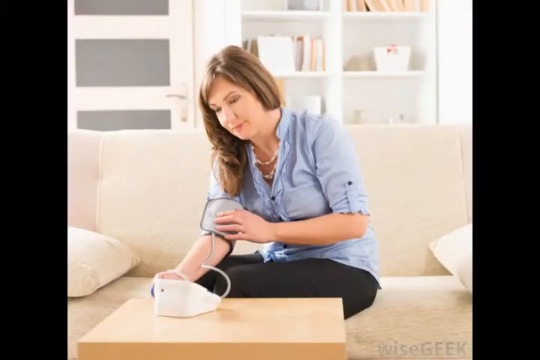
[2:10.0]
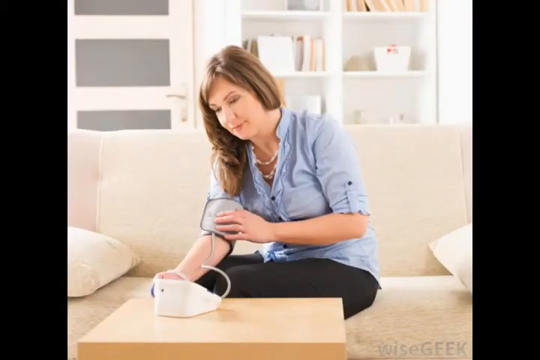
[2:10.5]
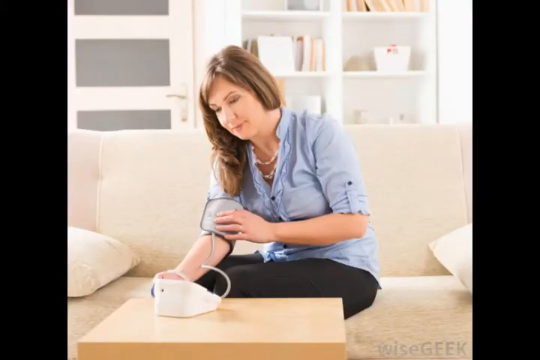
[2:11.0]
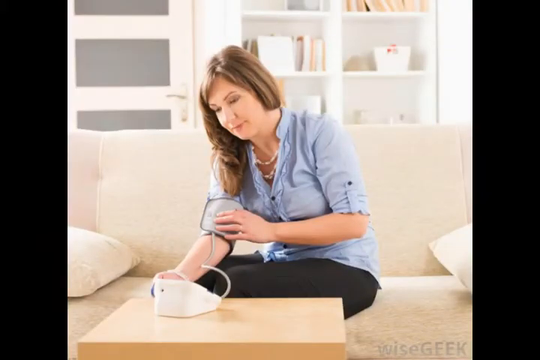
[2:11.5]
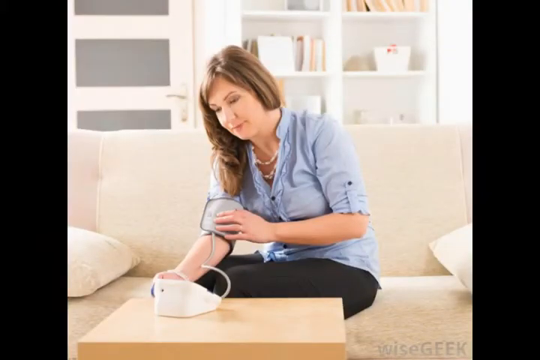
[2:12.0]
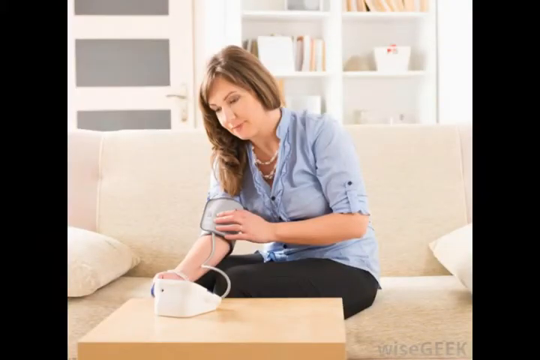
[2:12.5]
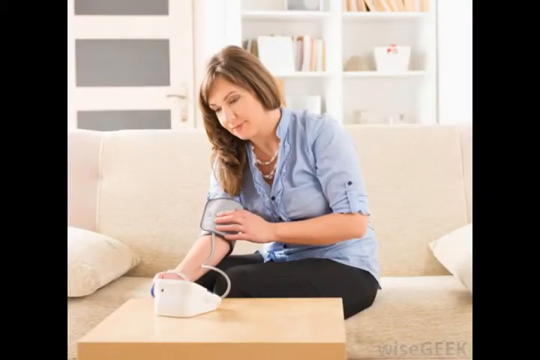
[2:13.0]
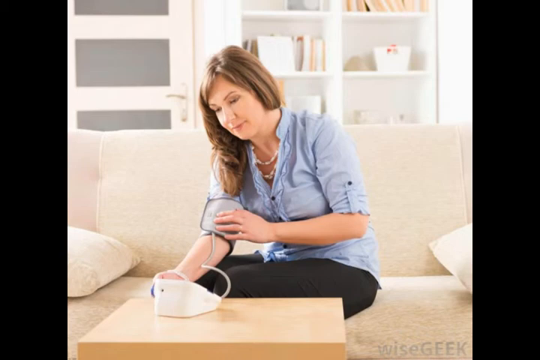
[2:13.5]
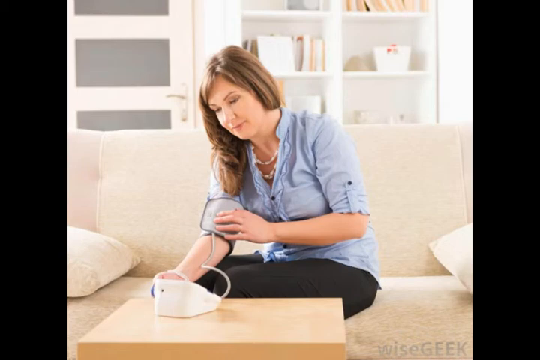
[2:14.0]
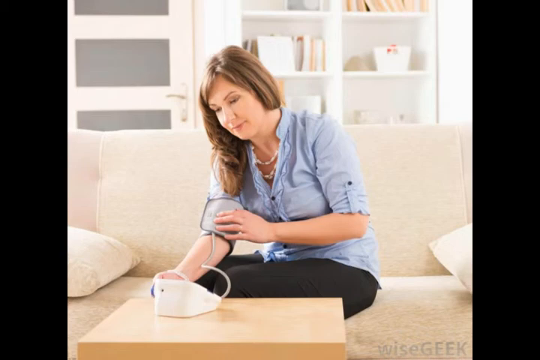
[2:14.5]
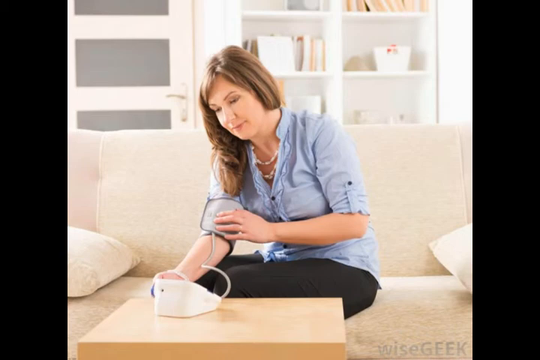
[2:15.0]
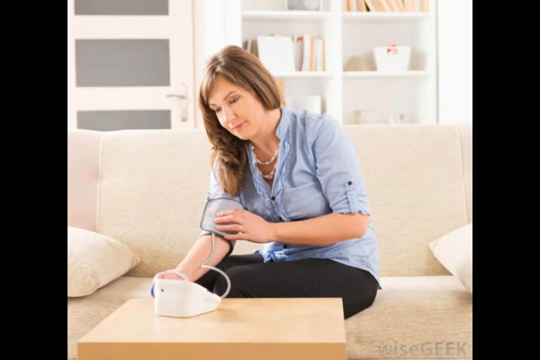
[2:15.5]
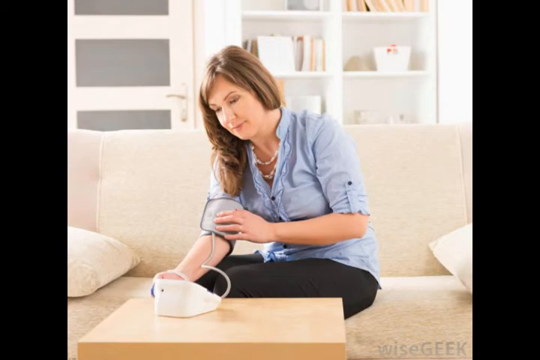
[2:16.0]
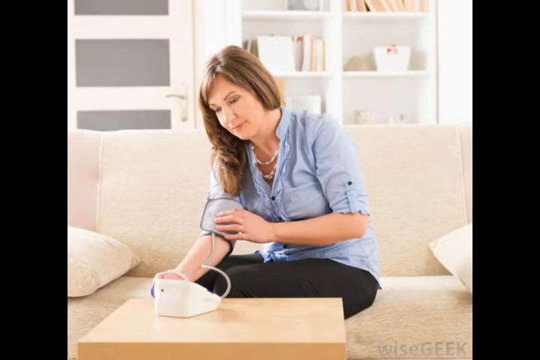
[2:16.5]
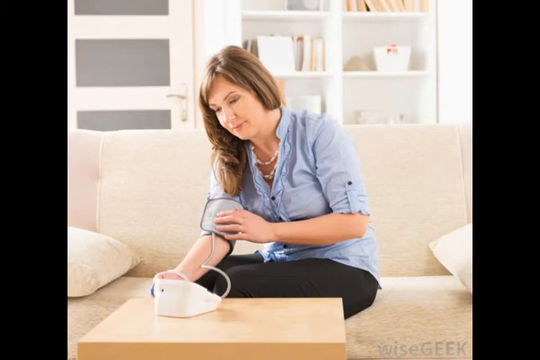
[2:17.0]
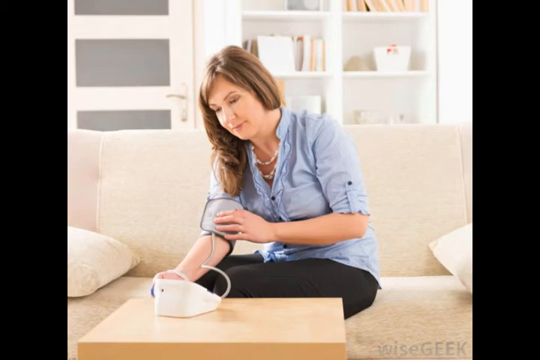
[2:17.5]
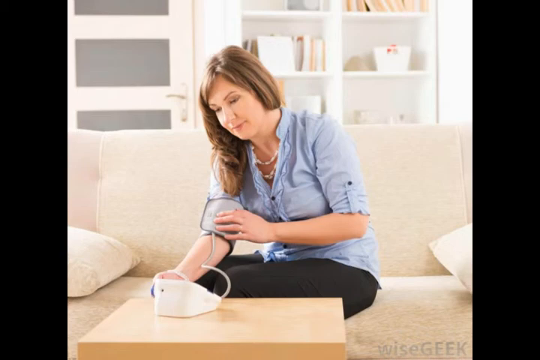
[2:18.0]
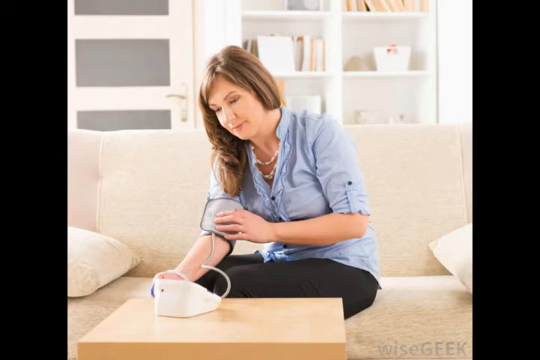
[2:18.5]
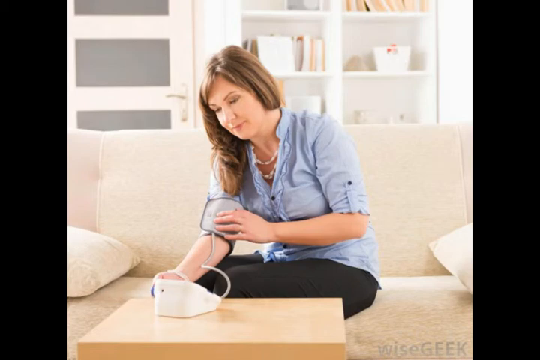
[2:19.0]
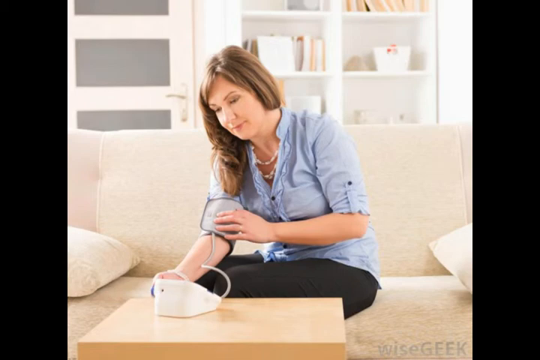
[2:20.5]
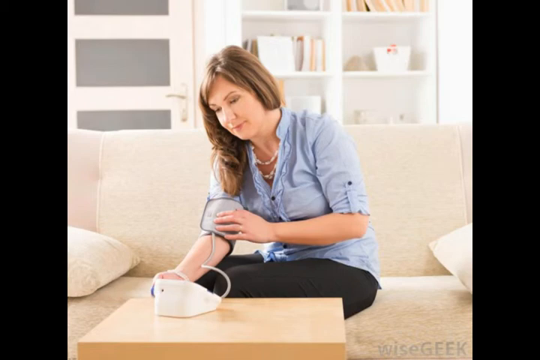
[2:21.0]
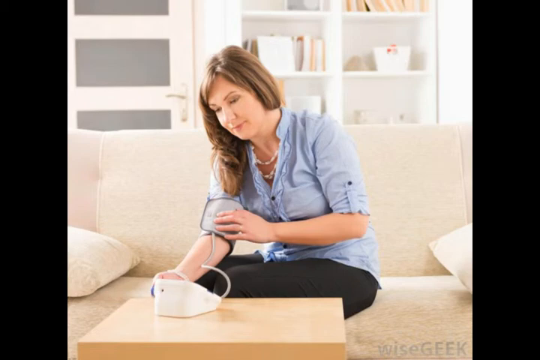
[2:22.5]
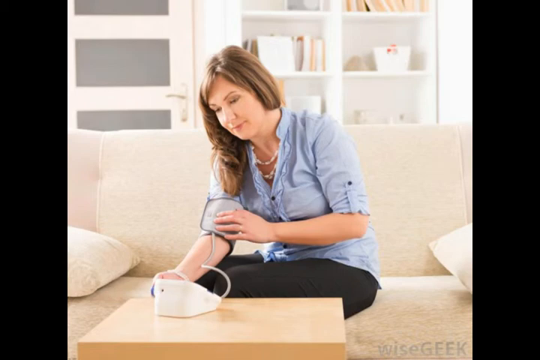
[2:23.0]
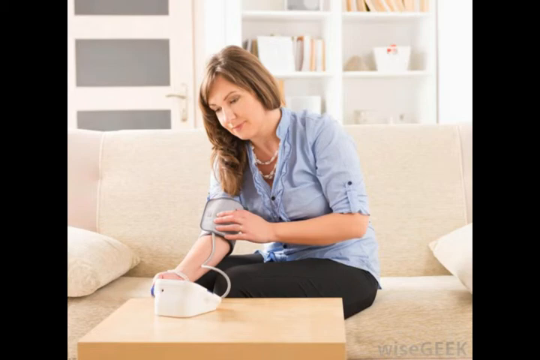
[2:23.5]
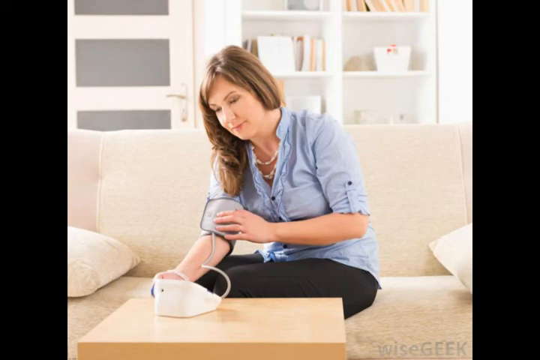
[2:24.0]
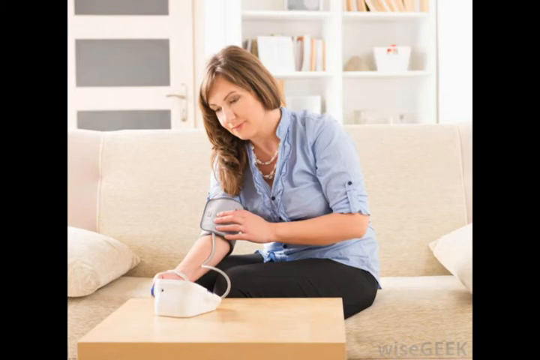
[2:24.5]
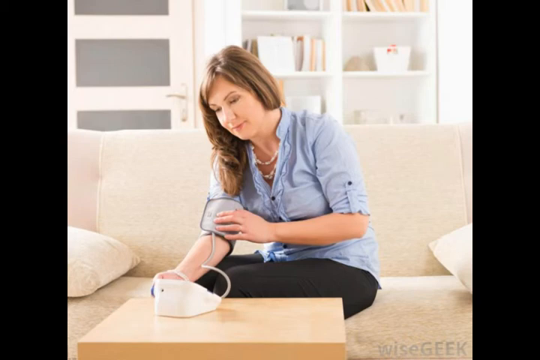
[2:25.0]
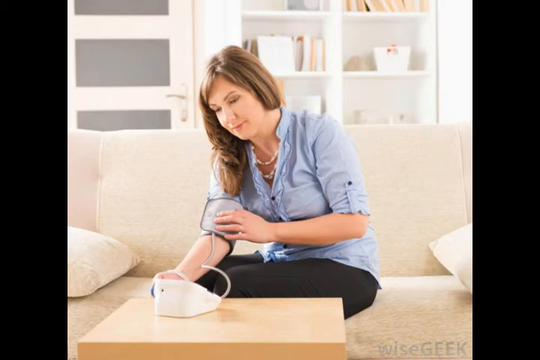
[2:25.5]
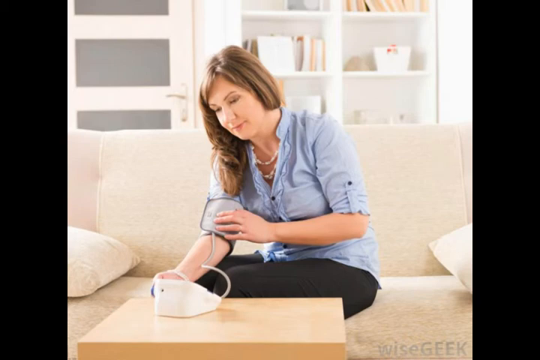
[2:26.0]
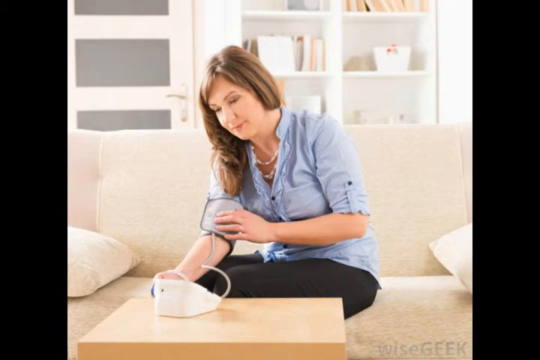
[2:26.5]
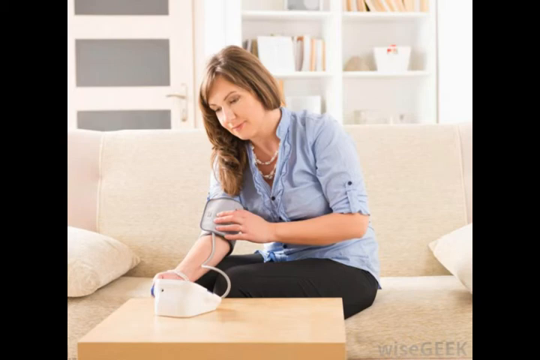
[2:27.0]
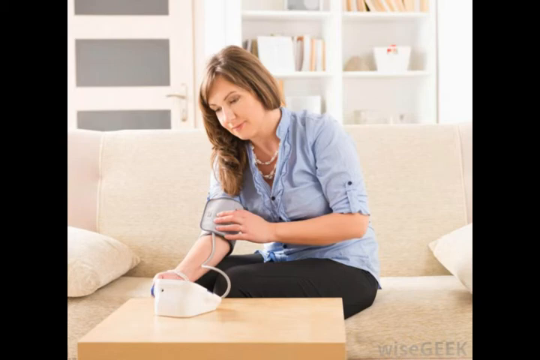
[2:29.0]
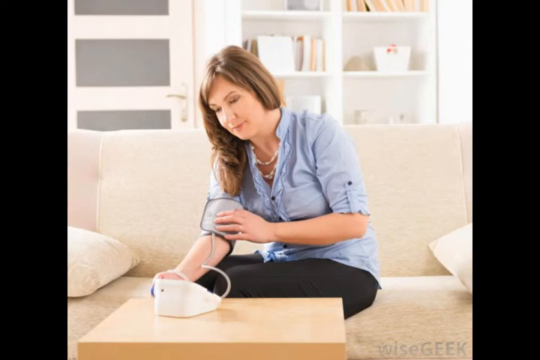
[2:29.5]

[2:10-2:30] A still shows a woman taking her own blood pressure using a machine. She has brown hair and wears a blue shirt and black trousers. She sits on a white sofa with two cushions visible. A table in front of her appears to be light colored wood. The white machine, apparently a blood pressure machine, sits on the table and has tubes going into a cuff around her arm above the elbow; she appears to be pressing buttons on it. Behind the woman, who is in her early 40s, is a bookshelf of some sort holding some books and little items. The background is very white, with a white door, white shelf and white sofa, giving a very clinical look.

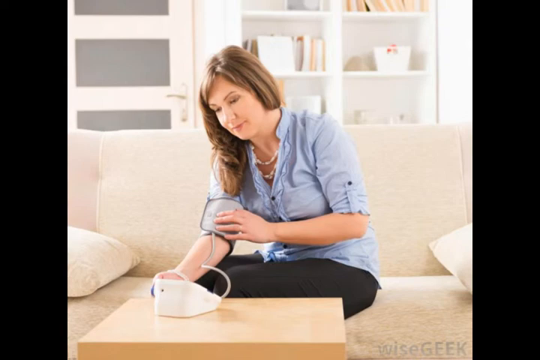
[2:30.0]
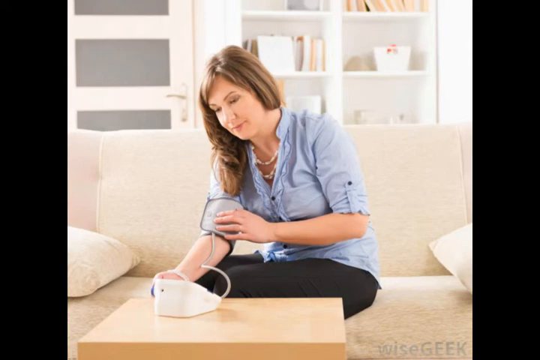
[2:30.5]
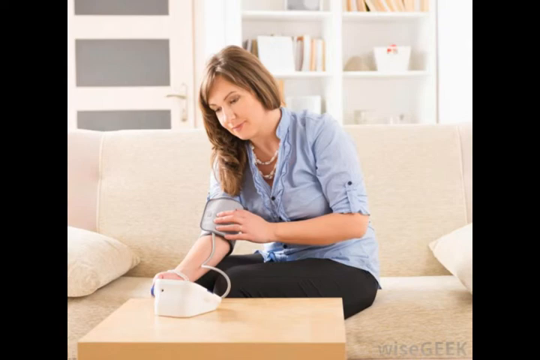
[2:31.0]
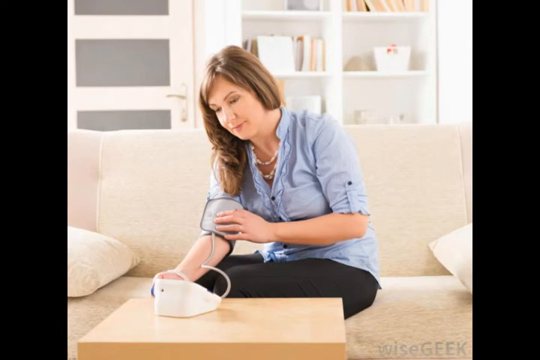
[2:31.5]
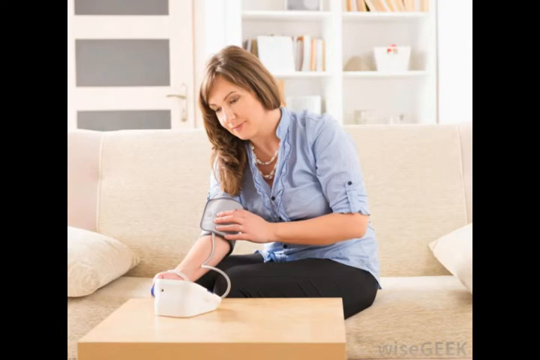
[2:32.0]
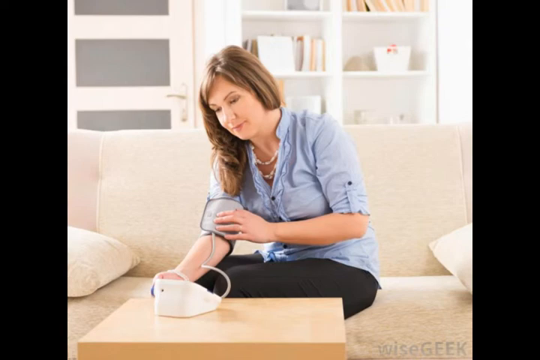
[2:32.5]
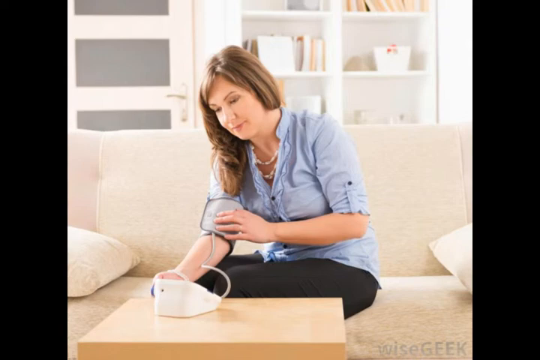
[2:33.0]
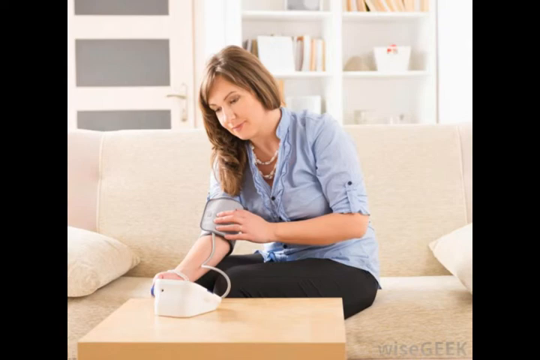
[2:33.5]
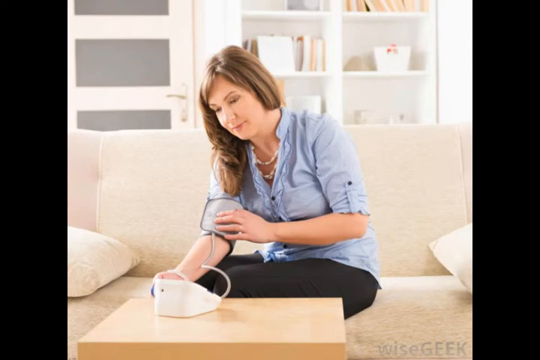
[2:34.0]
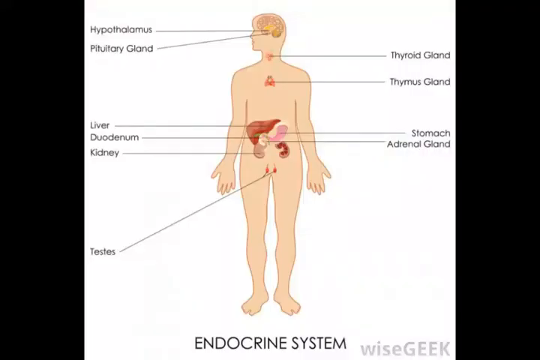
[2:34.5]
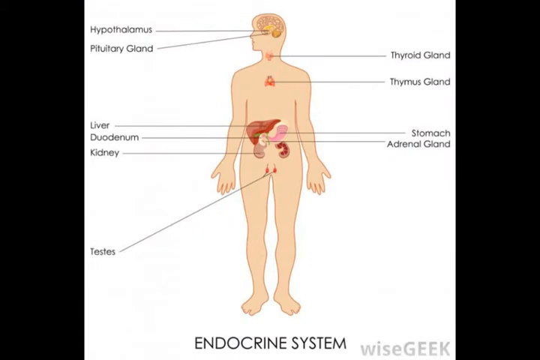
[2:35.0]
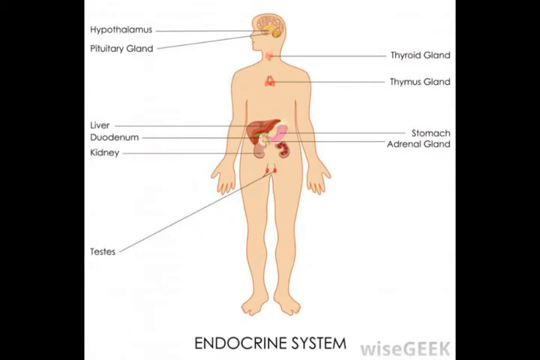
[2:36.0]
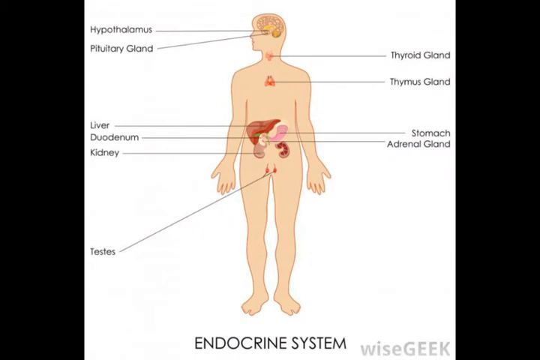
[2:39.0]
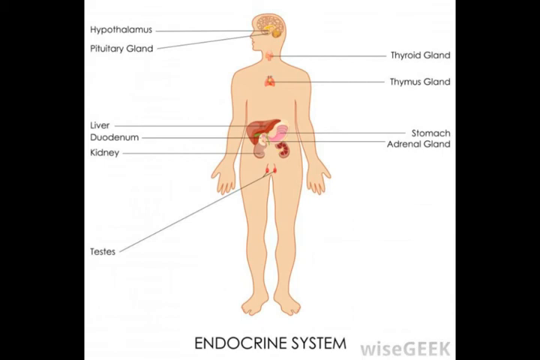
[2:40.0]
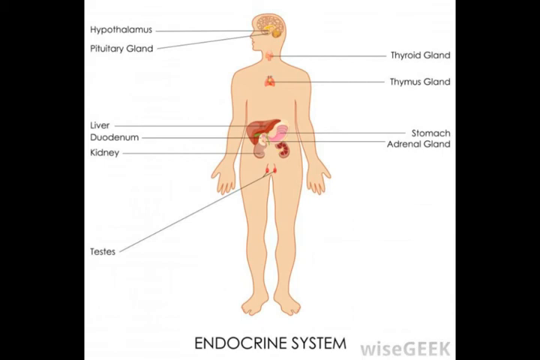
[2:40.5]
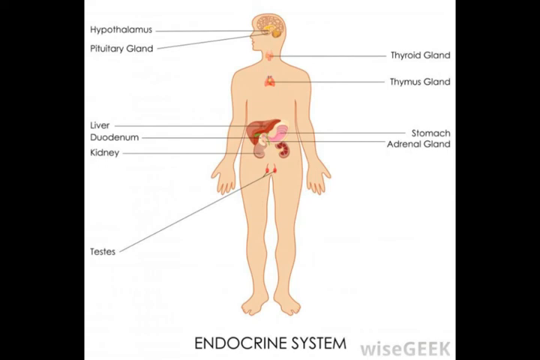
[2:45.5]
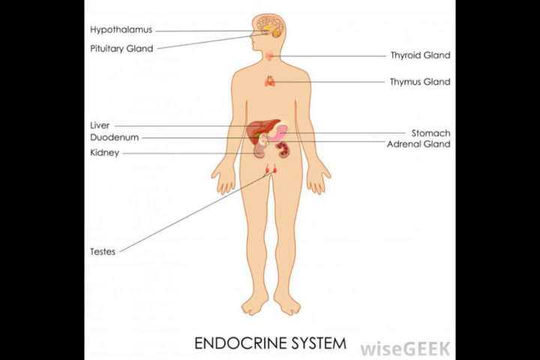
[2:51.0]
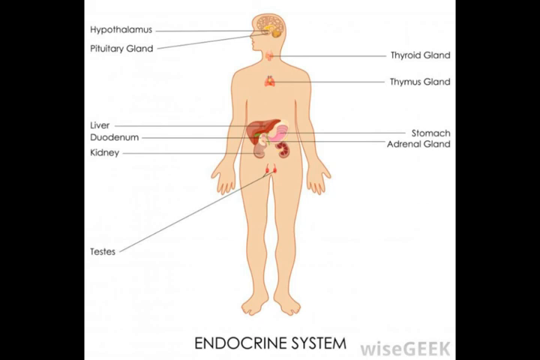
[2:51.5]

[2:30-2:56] A woman, appearing to be in her early 40s, sits taking her blood pressure in a room with a white sofa, a light-colored table, white bookshelves behind her and a white door behind her. She appears reasonably relaxed as she operates the machine, with the cuff attached to her right arm just above the elbow. The video then moves to a slide of the male human body labeled "endocrine system", apparently from WISEgeek. It shows the locations of the hypothalamus and pituitary gland in the brain, the thyroid gland in the throat, the thymus gland in the middle of the chest, the liver, stomach, duodenum, adrenal gland and kidney in the abdomen, and the testes between the legs. The video ends on this slide.